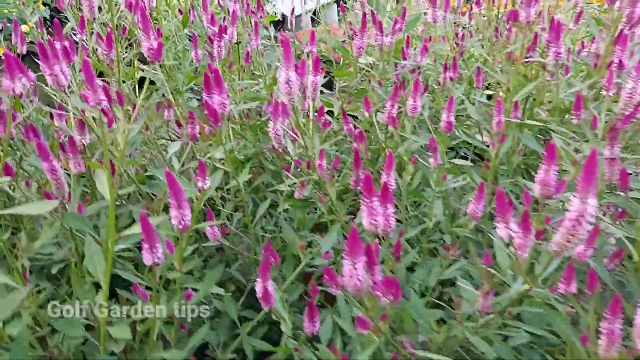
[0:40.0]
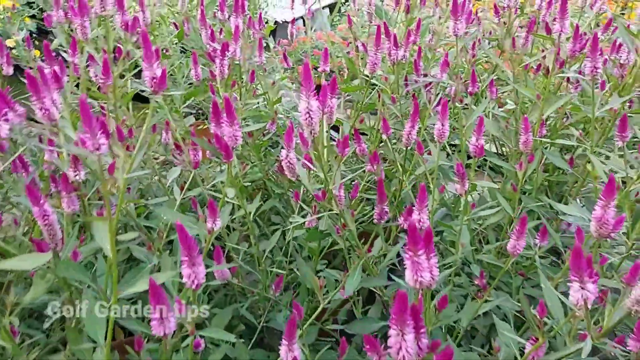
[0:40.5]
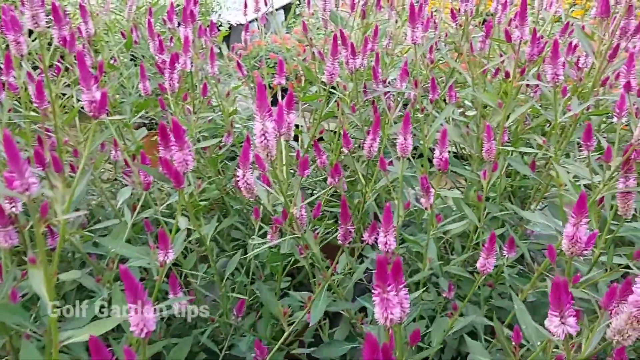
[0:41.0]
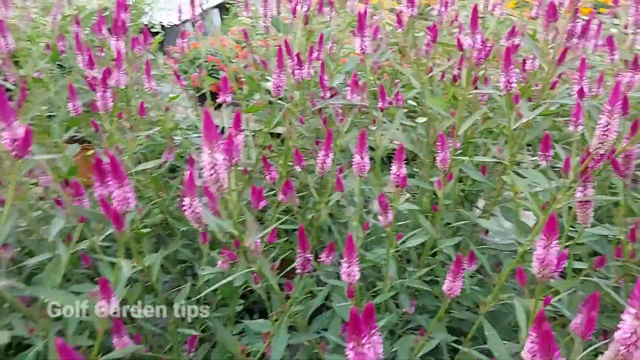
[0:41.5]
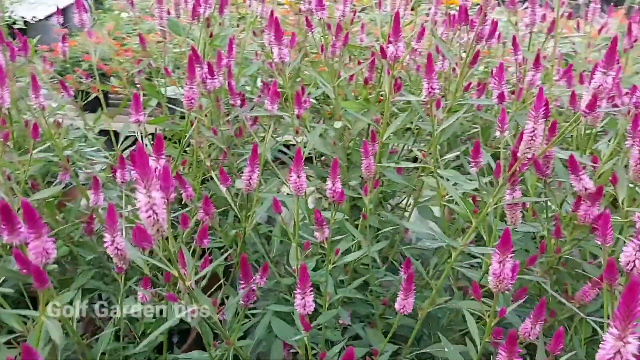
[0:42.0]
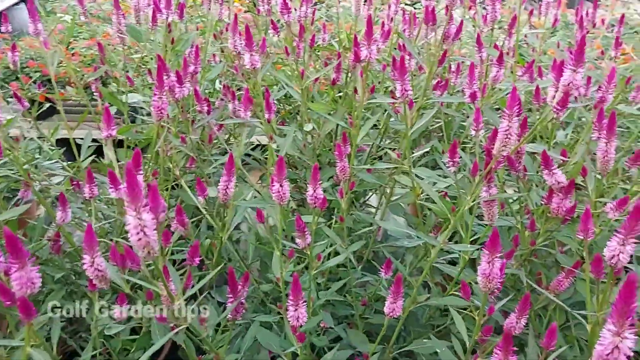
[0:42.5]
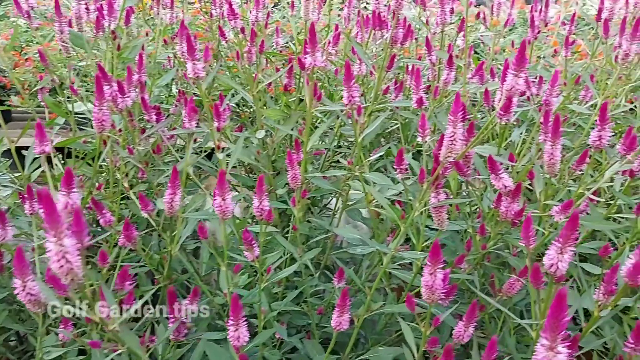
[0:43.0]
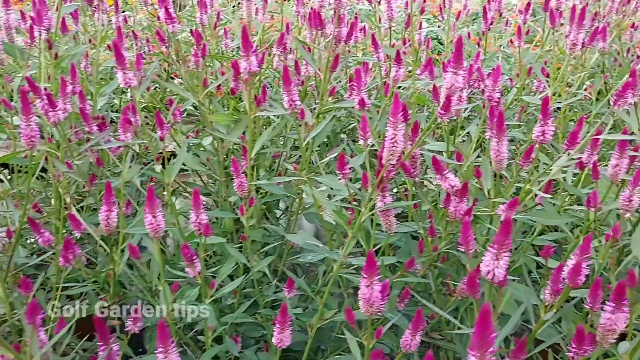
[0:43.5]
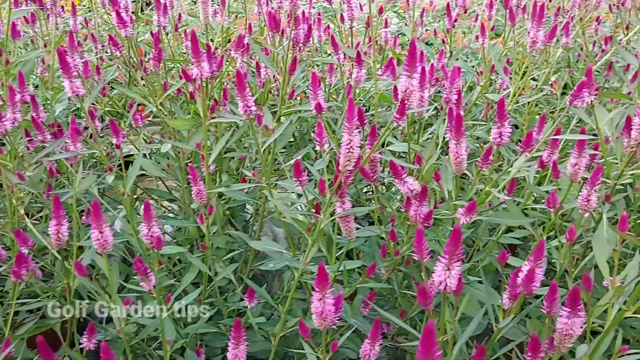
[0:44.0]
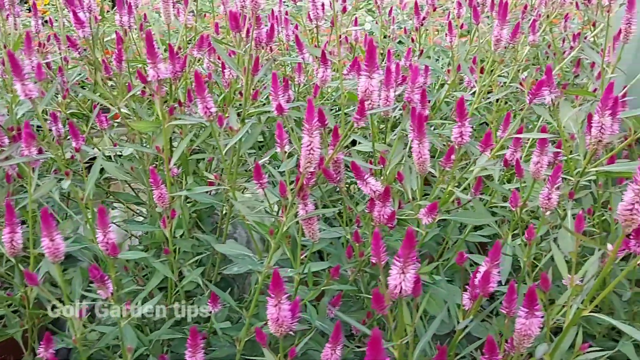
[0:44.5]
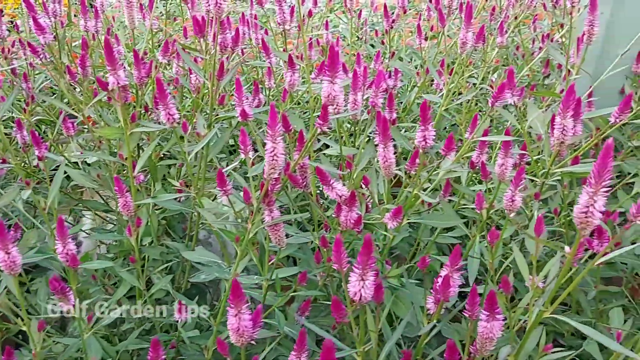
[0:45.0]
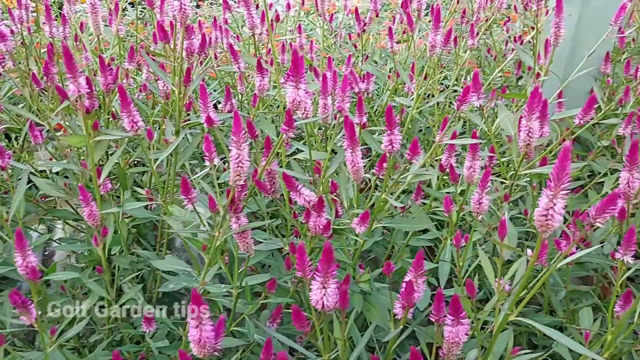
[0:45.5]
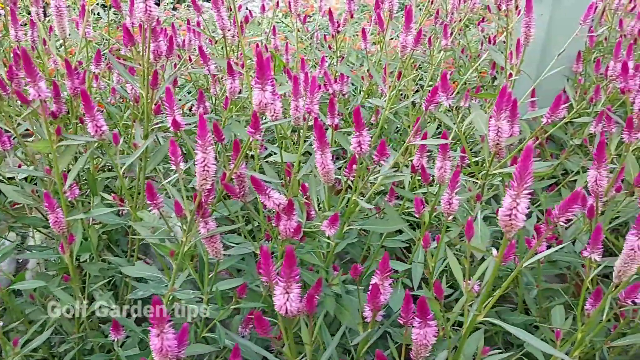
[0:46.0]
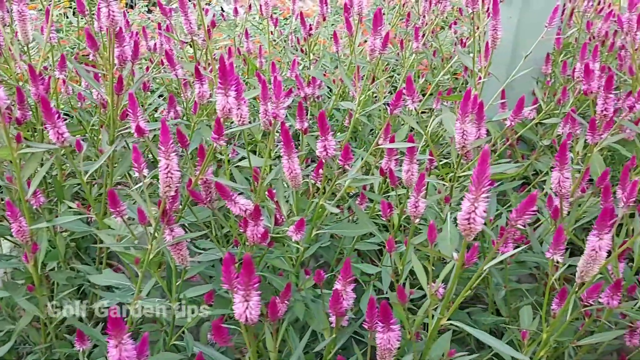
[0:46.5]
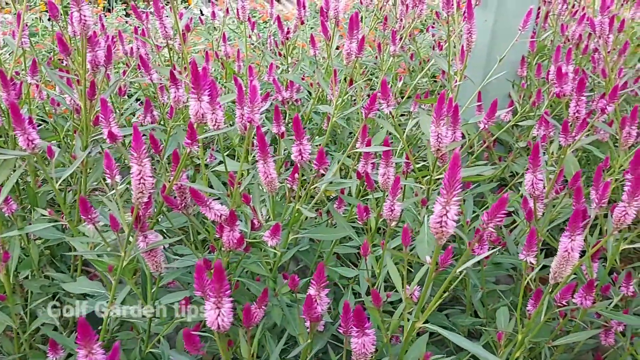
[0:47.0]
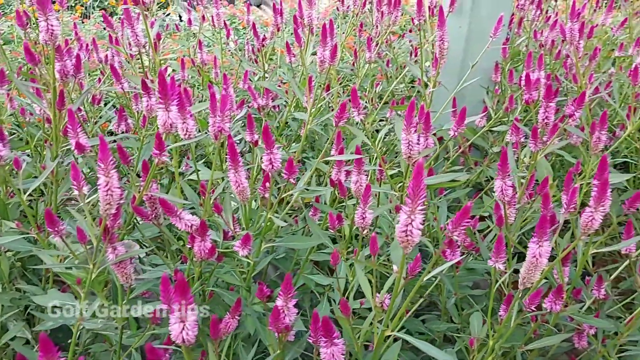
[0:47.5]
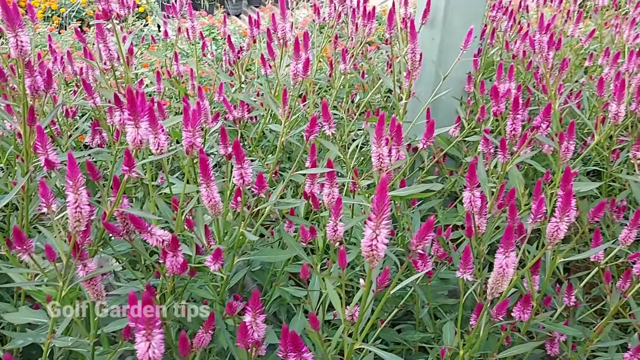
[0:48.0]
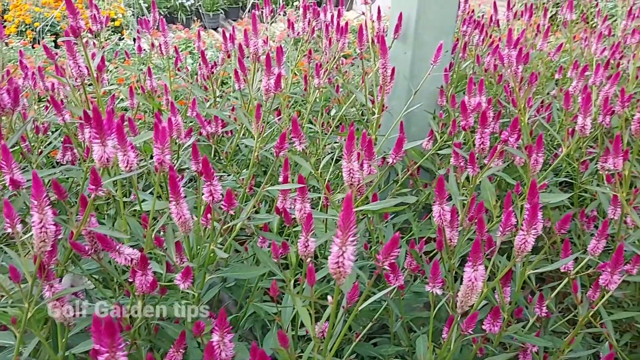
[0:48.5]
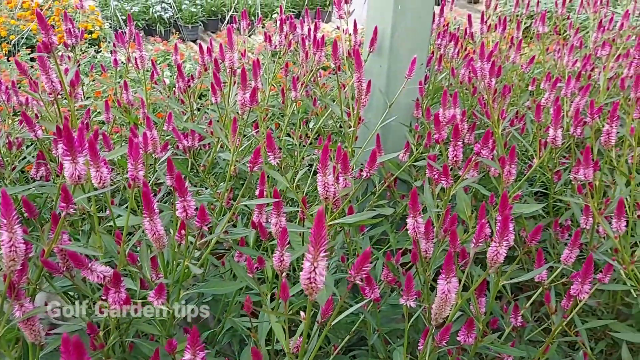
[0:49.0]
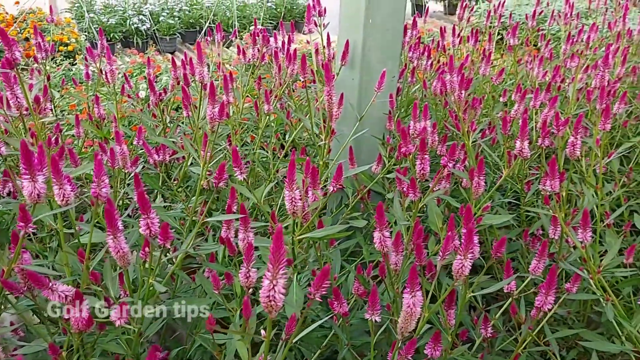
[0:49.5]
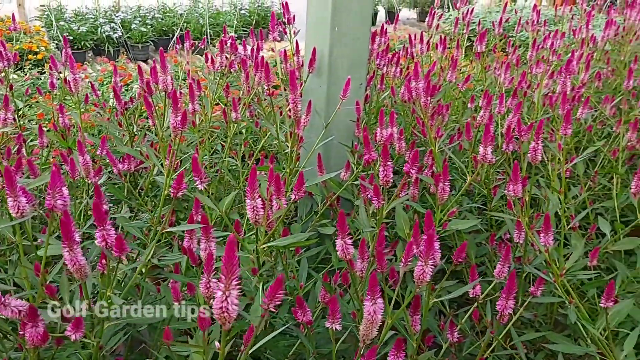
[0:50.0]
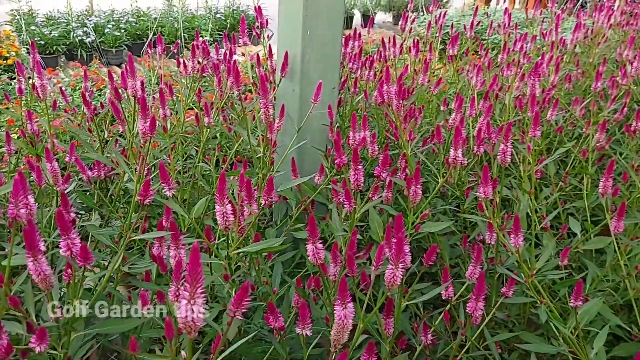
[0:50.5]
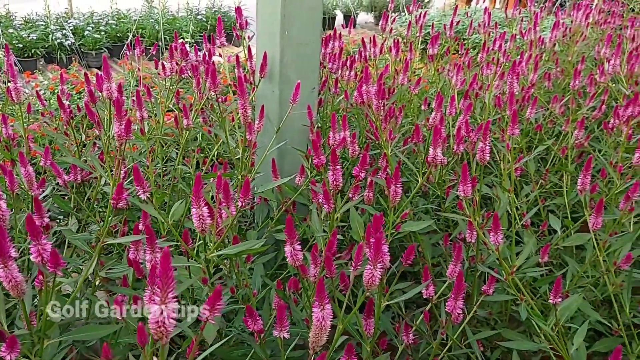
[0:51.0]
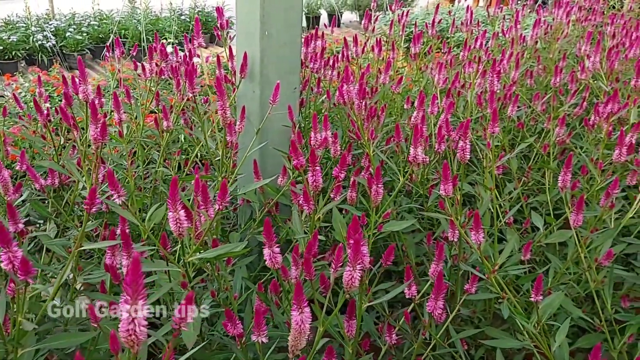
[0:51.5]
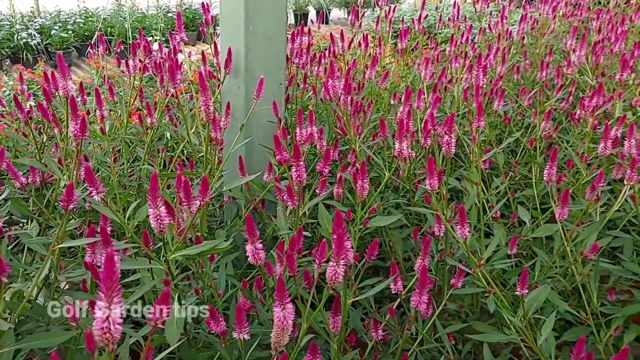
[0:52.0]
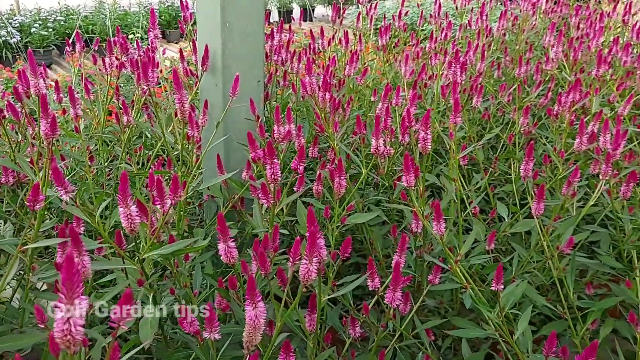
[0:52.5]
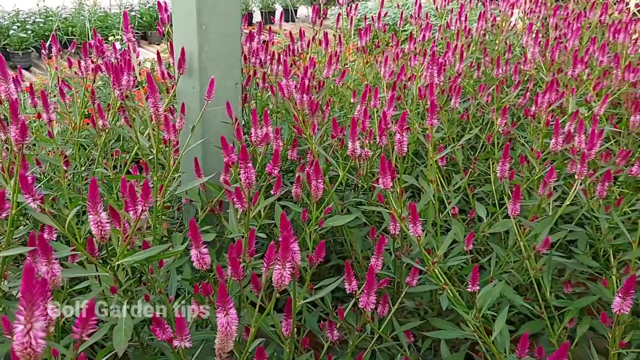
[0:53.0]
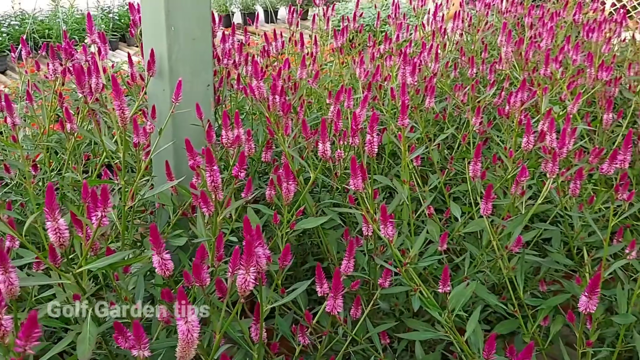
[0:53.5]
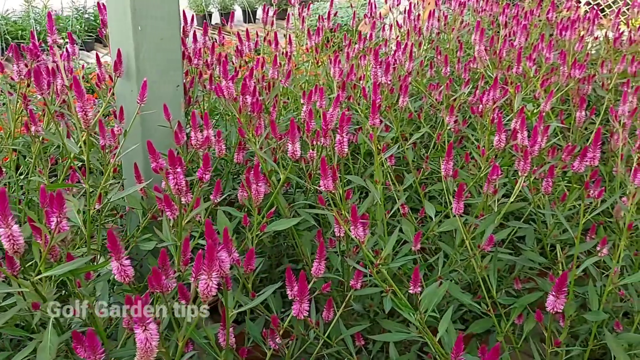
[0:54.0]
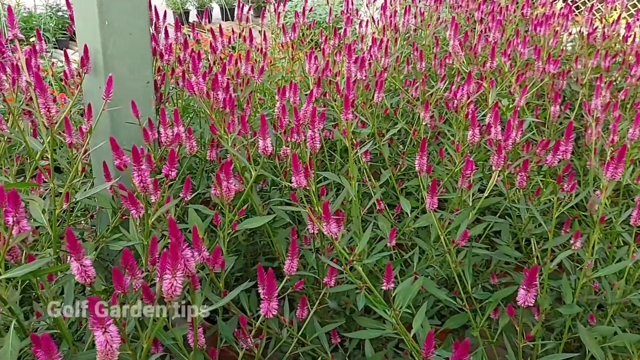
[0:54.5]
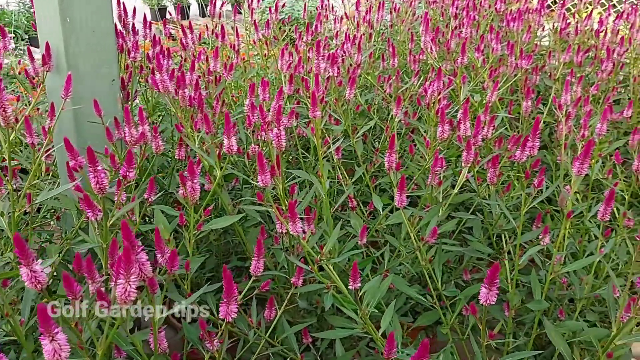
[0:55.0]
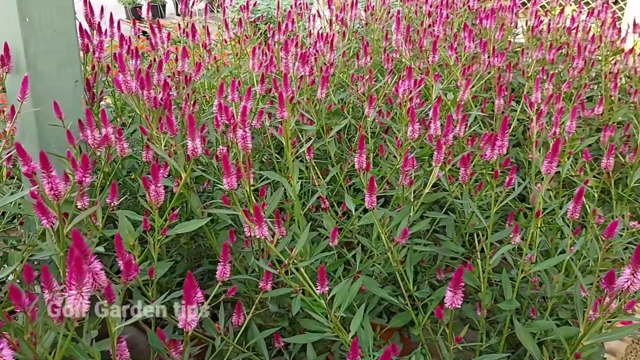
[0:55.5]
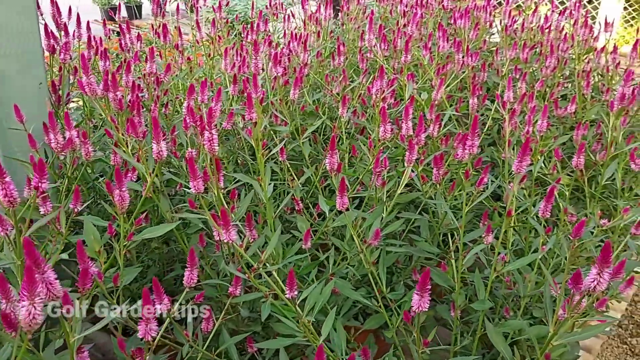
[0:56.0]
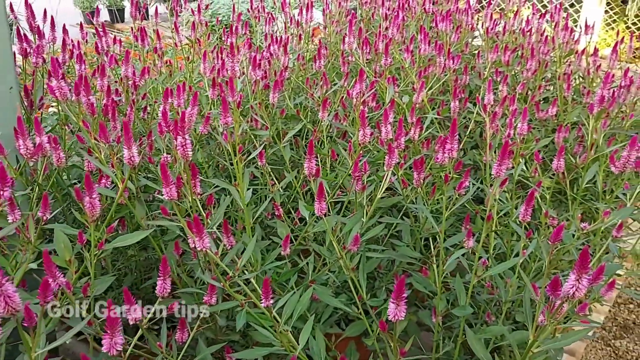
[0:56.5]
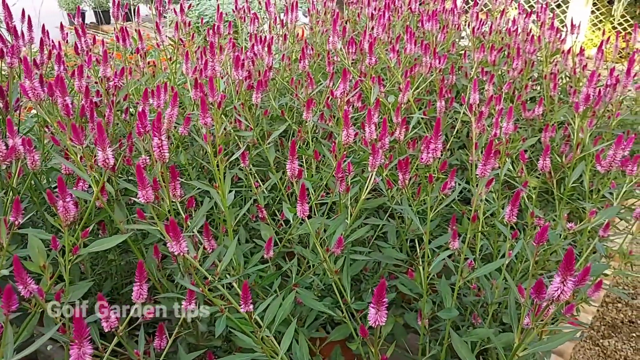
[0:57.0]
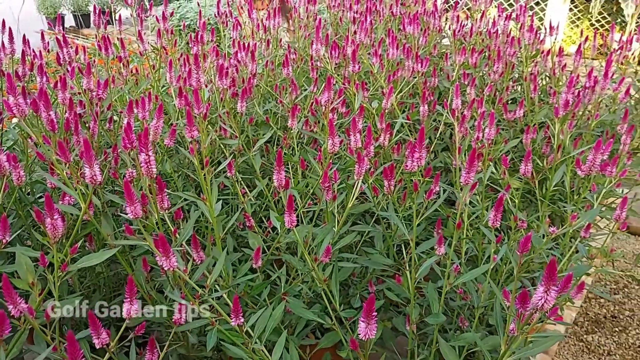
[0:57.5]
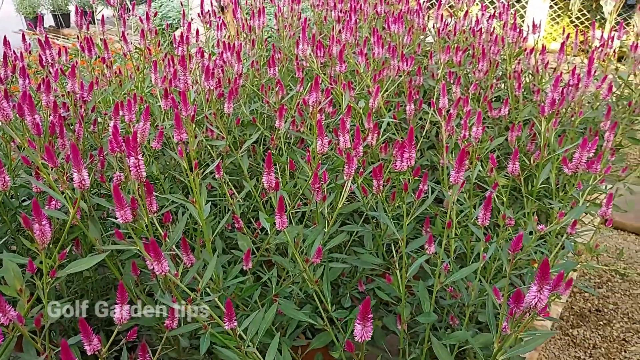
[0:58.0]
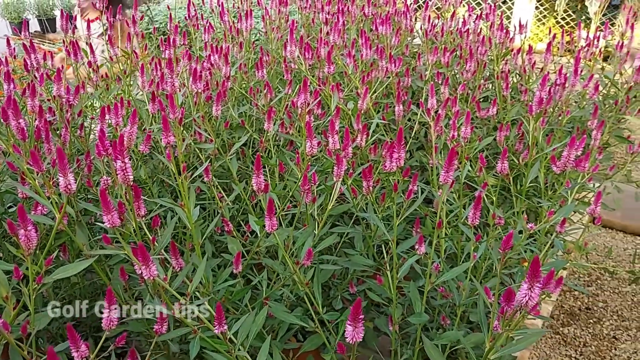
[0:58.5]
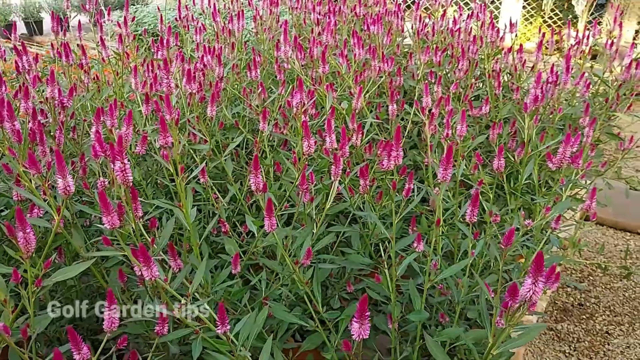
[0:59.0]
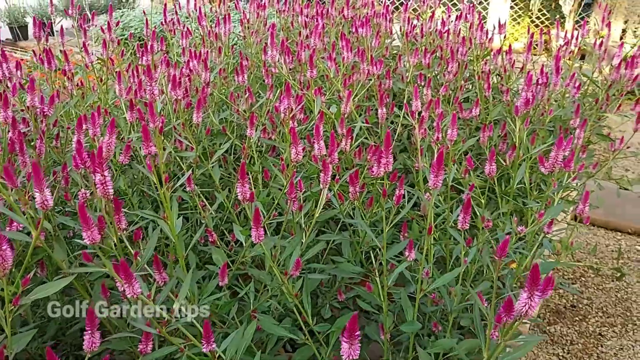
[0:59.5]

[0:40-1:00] Stopping at the end of the row of plants, the camera person zooms in again on individual buds, possibly narrating an explanation of garden tips, while white text on screen reads "golf garden tips". As the camera pulls up, it becomes clear they are in an outdoor nursery of sorts, with a child playing in the background as they walk around. Panning down, the camera shows that the ground is a sort of gravel and dirt path and that the plants are in individual pots on a raised, sort of bamboo bed to keep them from getting damp. In the background are other plants, including potted marigolds, some more traditional houseplants, and other garden equipment, including a large trellis painted a sort of pale yellow. A large number of marigold pots surround the area all the way on the left side. Some hang in the foreground, as do other houseplants in black pots, and some are on a separate table that resembles the one holding the flowers in front of the camera. The pots are five or six across, and the length of the row cannot be made out from the way the camera is shooting.